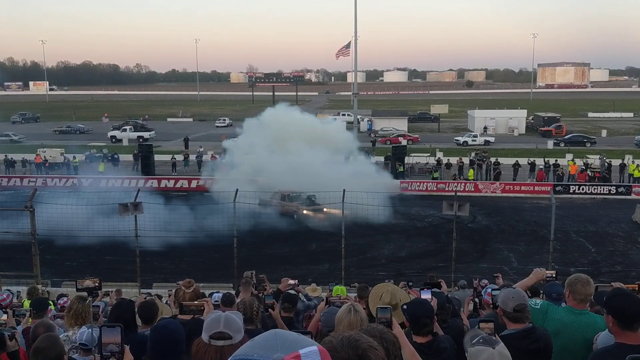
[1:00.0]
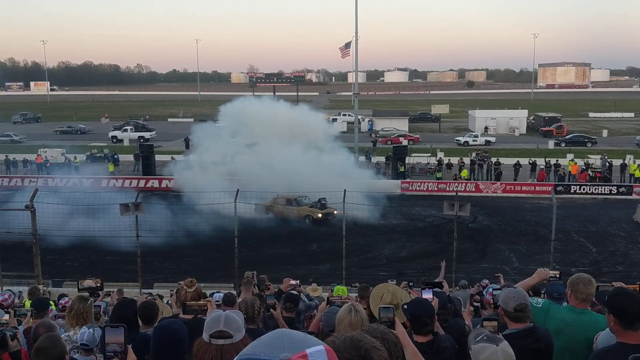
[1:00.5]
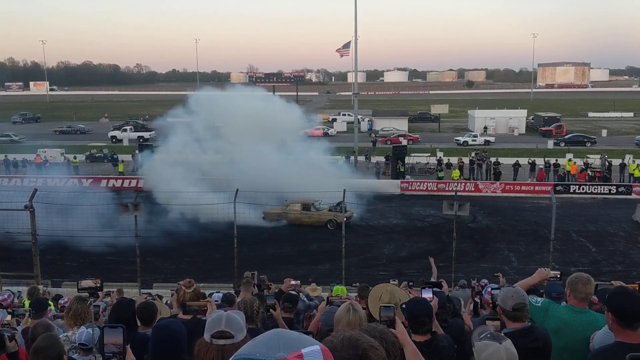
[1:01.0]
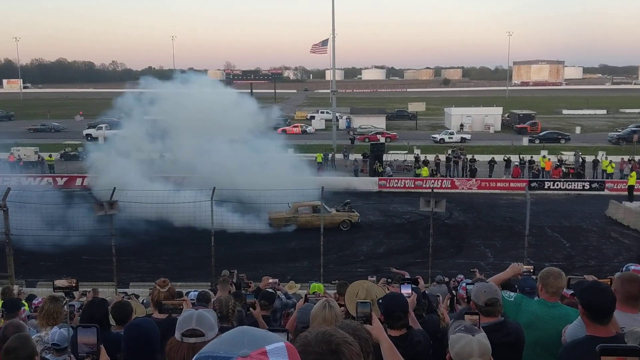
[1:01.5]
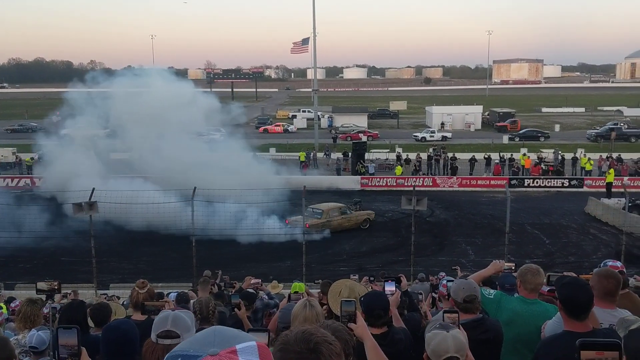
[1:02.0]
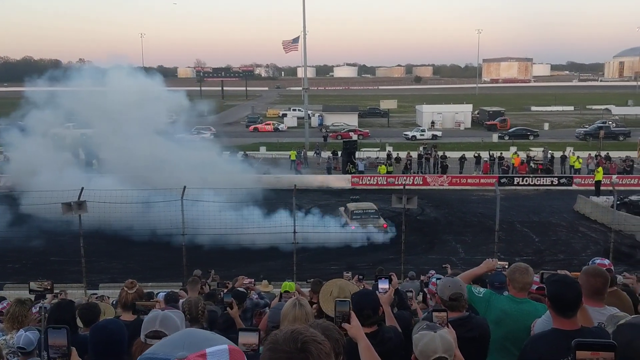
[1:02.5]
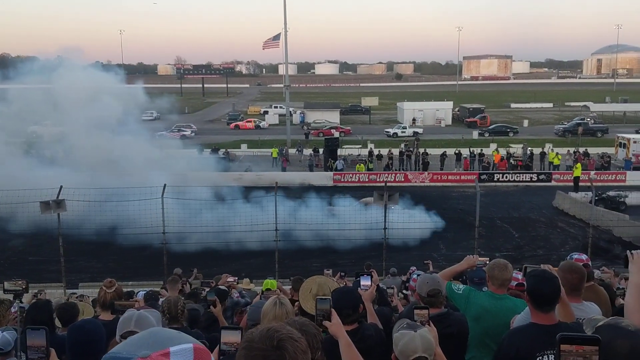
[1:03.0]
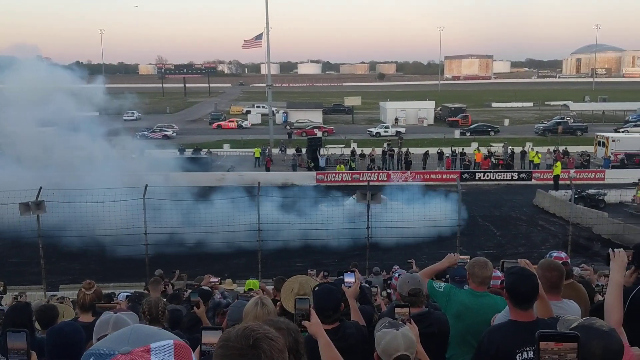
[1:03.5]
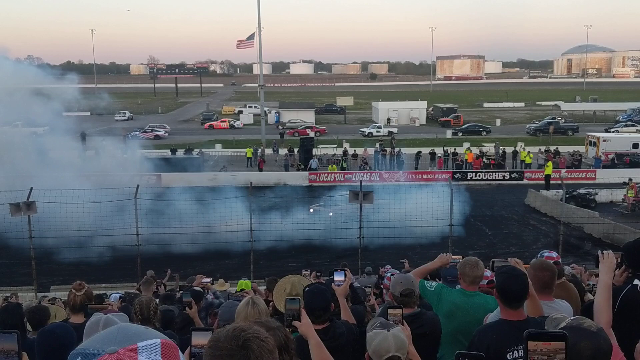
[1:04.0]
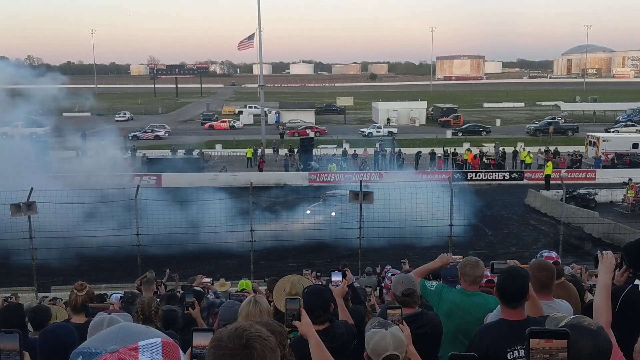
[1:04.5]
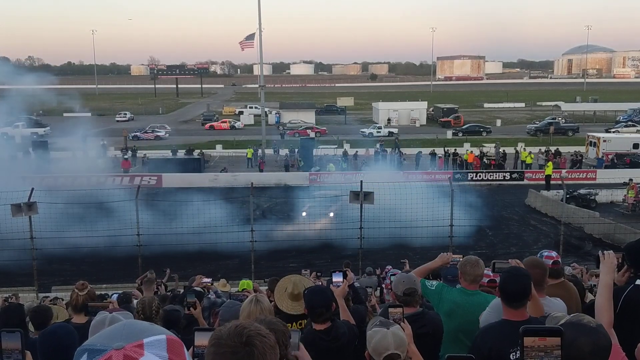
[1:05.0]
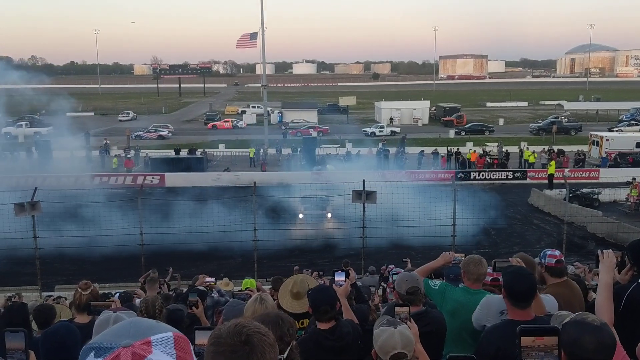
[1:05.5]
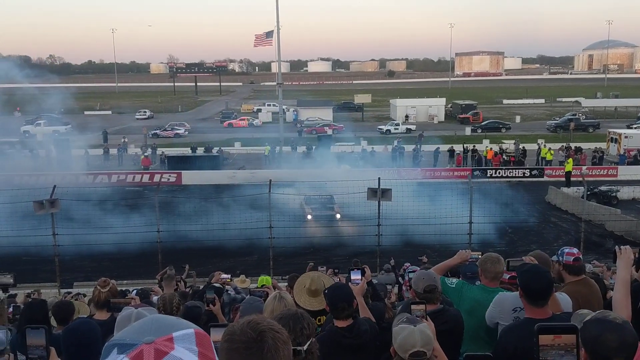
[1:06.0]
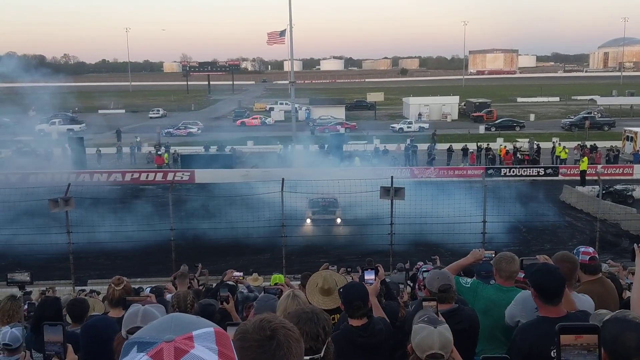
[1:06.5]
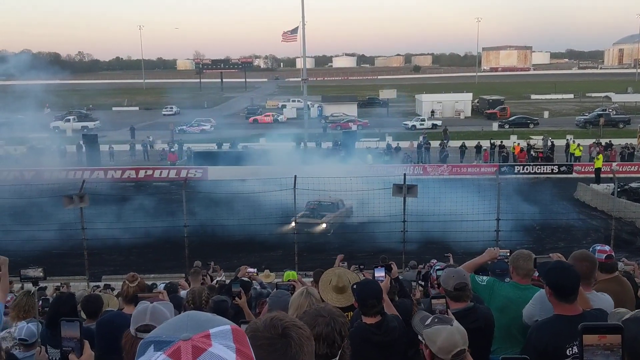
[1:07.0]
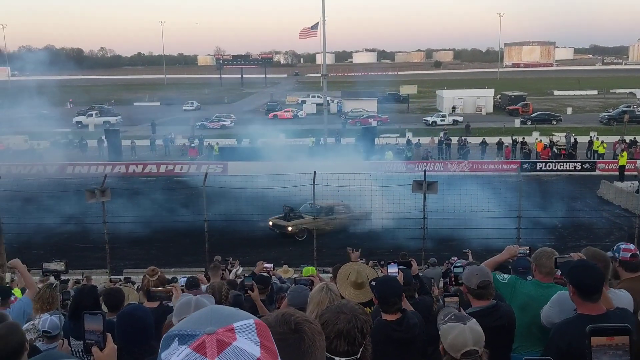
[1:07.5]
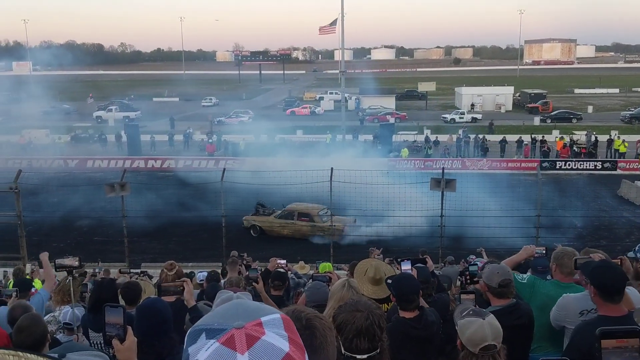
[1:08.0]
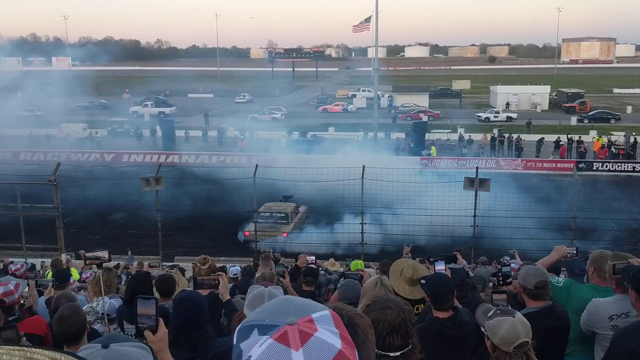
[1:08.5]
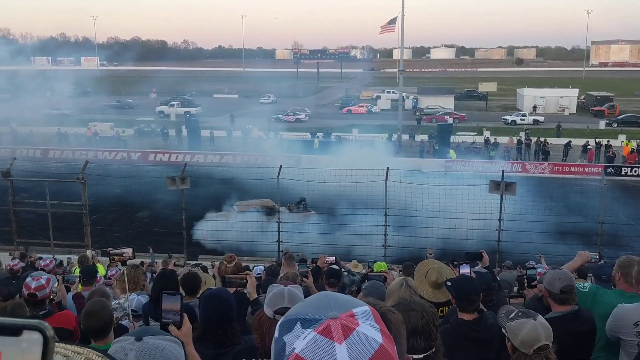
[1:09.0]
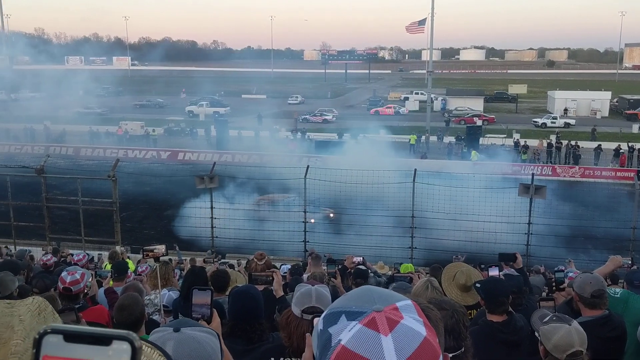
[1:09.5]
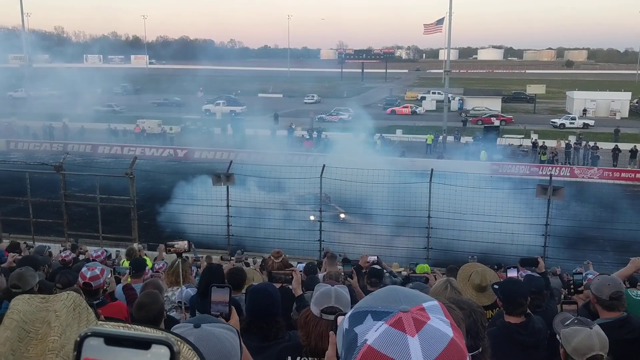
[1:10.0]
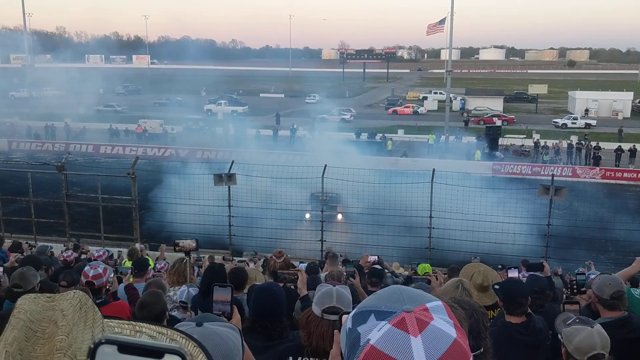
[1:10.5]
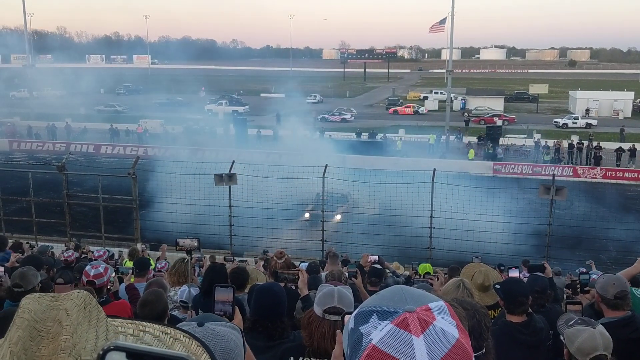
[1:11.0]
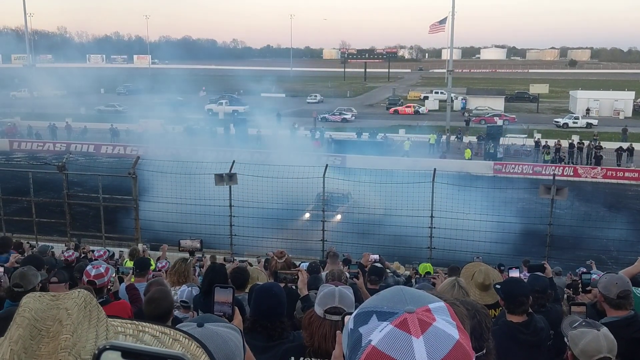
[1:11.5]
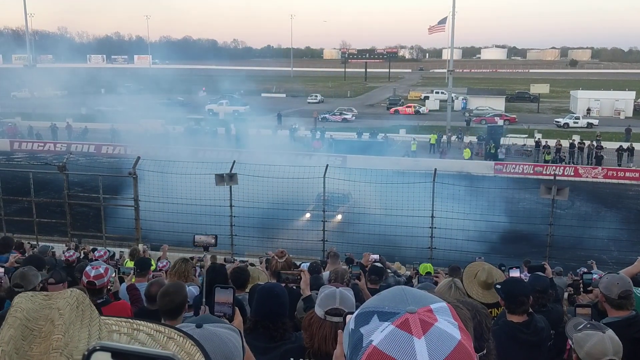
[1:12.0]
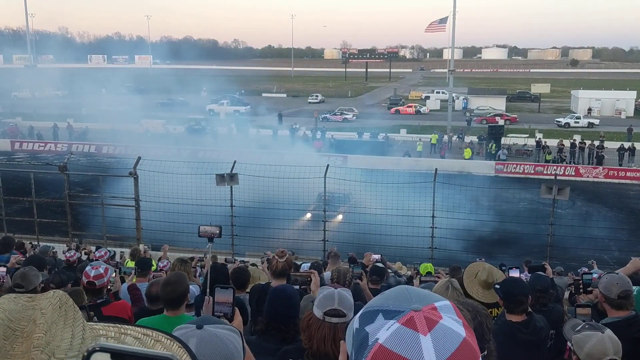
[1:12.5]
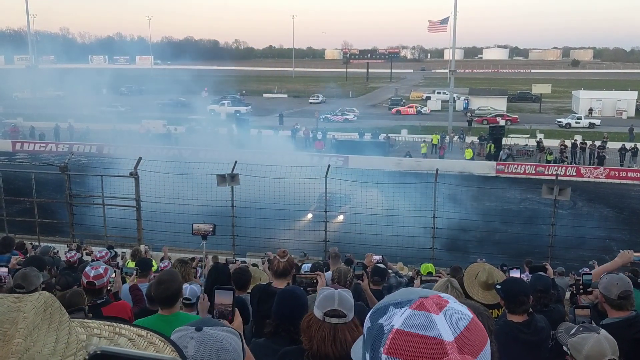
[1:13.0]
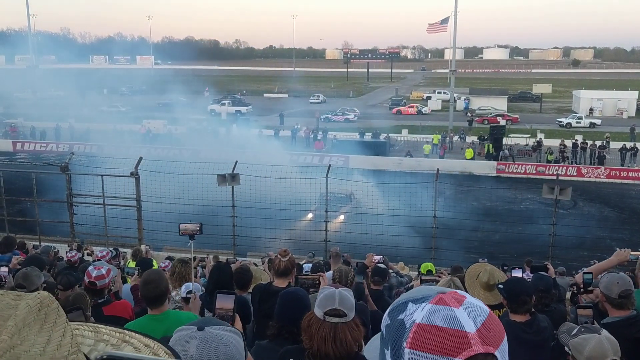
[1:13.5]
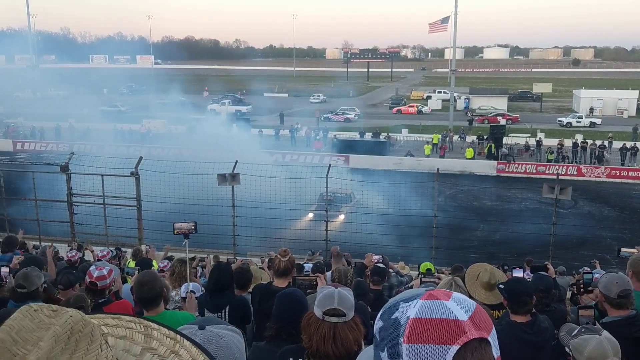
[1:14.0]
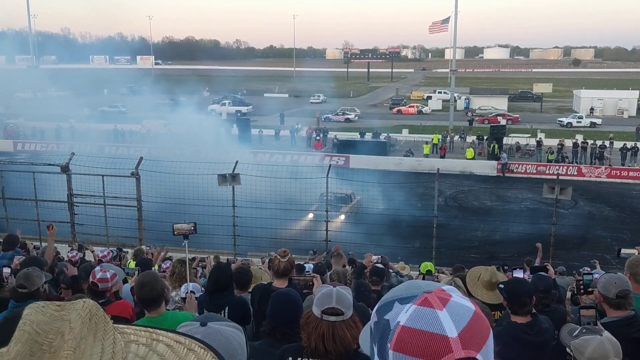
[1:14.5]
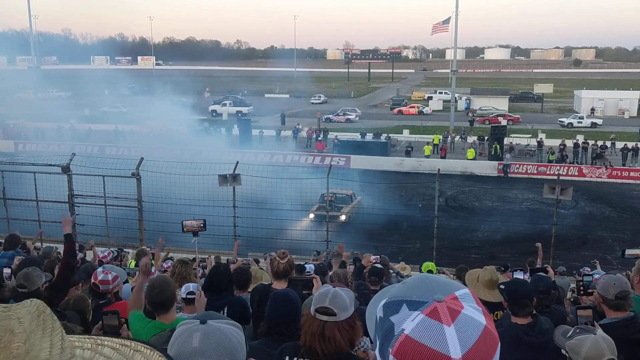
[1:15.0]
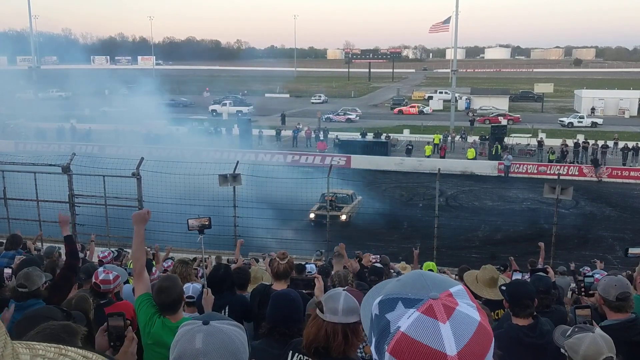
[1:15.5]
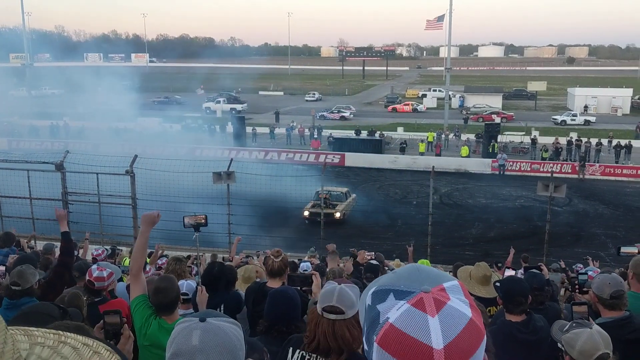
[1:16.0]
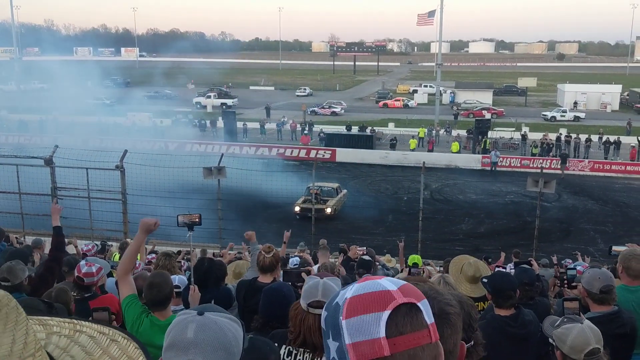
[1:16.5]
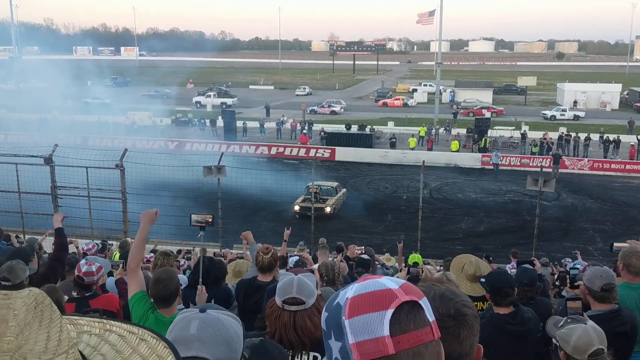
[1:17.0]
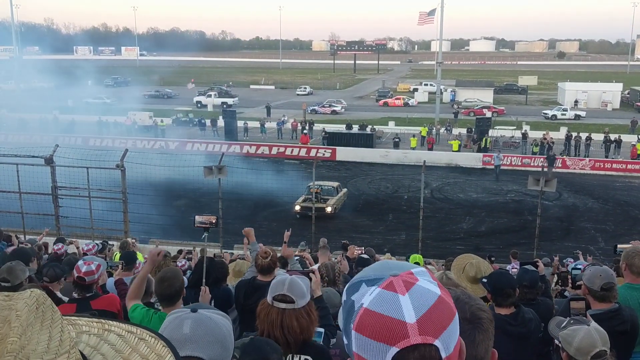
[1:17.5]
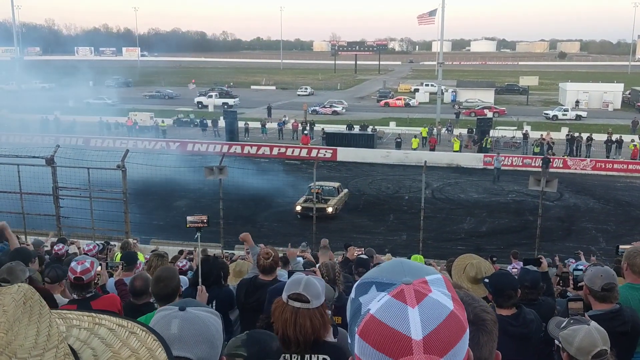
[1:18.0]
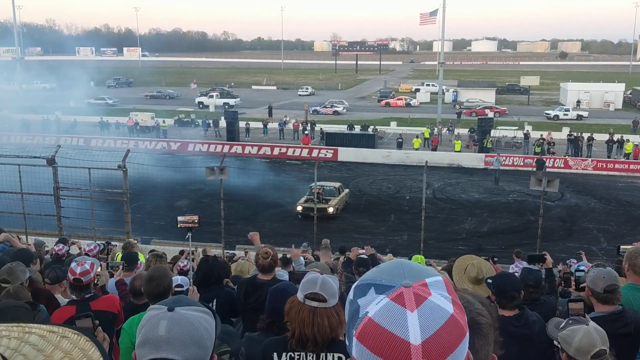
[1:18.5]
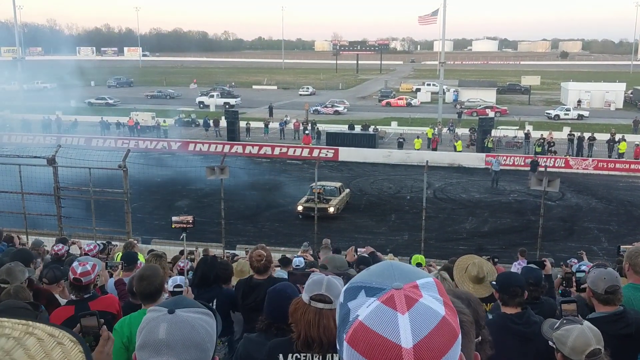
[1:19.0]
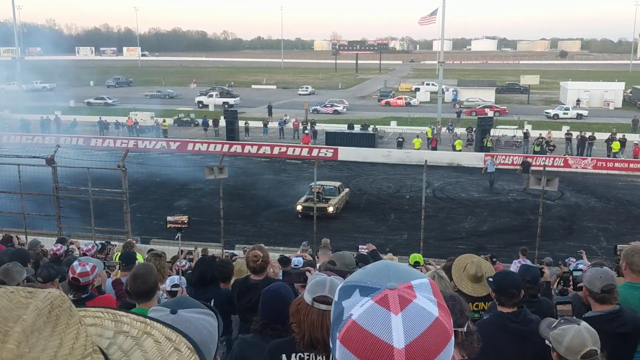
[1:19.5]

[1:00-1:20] The racetrack for car racing continues to be shown, with a significant section for fans, perhaps hundreds or thousands of whom are visible. Many of the fans are taking pictures and videos with their mobile phones. The skies are clear with no clouds, and it appears to be sunny; it also appears to be evening, as the sky is somewhat red. The location seems to be the United States of America, as a USA flag is posted on one of the pillars. On the racetrack, a yellow car with its front headlight switched on spins anti-clockwise, releasing a significant amount of fumes from its exhaust. It does this a few more times, and meanwhile certain fans raise their hands in celebration. The car then spins clockwise, again releasing a significant amount of fumes from its exhaust. The car is old.